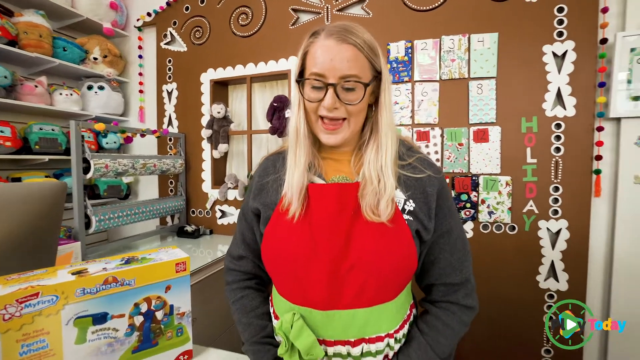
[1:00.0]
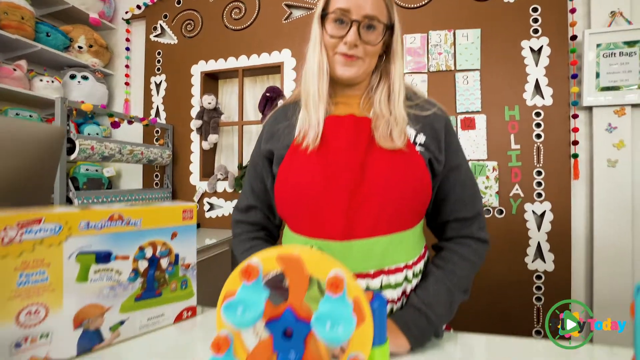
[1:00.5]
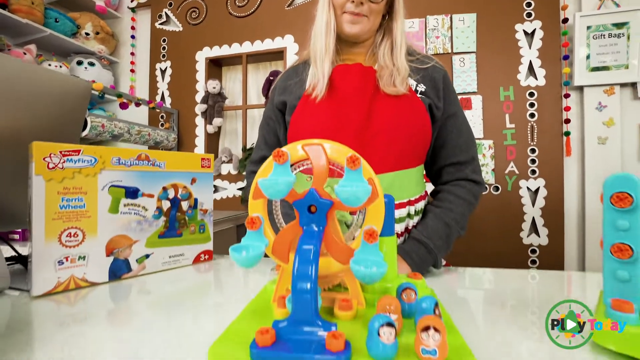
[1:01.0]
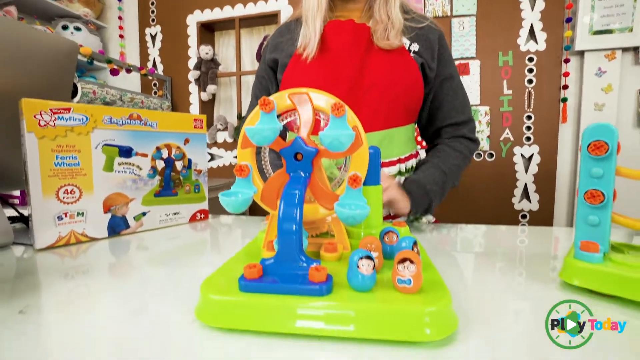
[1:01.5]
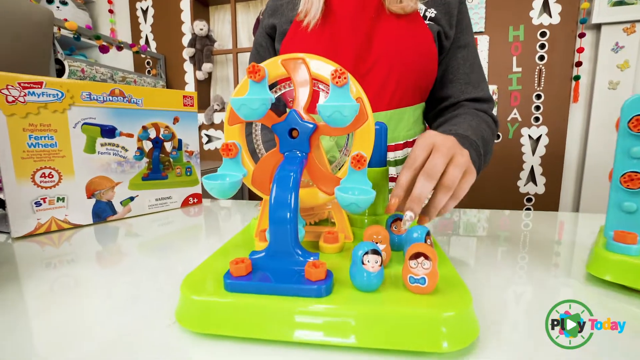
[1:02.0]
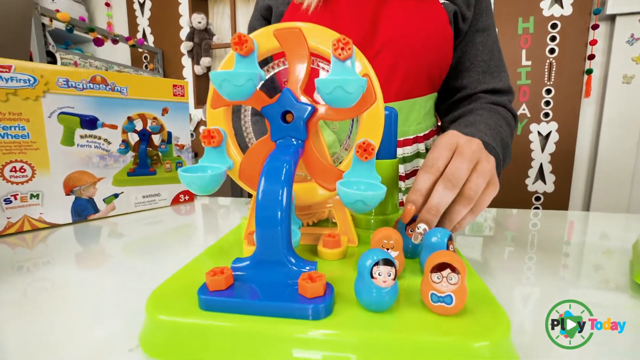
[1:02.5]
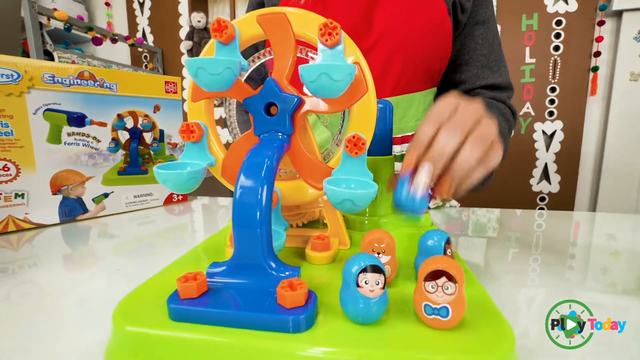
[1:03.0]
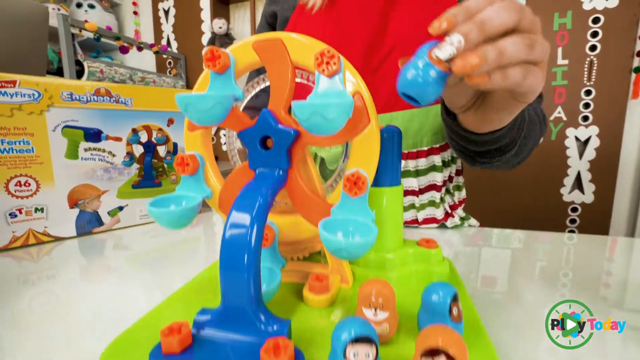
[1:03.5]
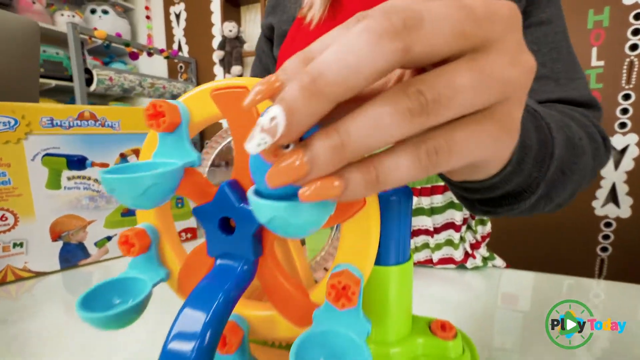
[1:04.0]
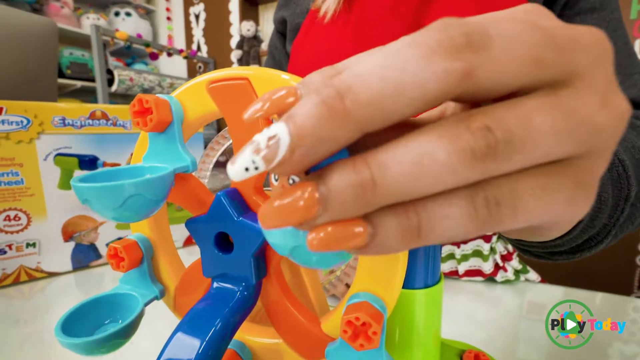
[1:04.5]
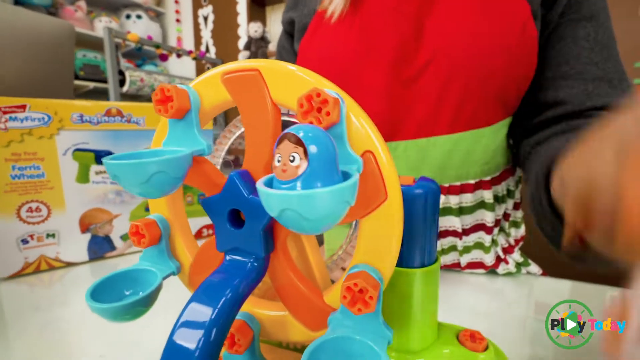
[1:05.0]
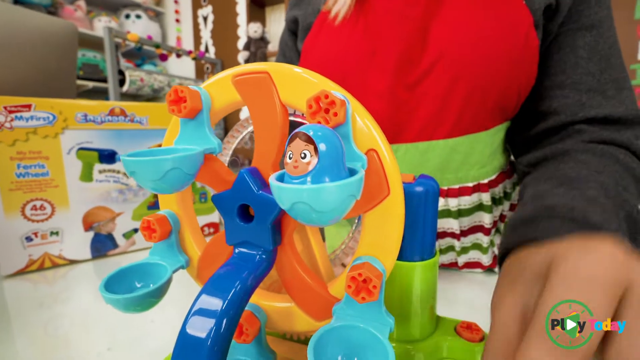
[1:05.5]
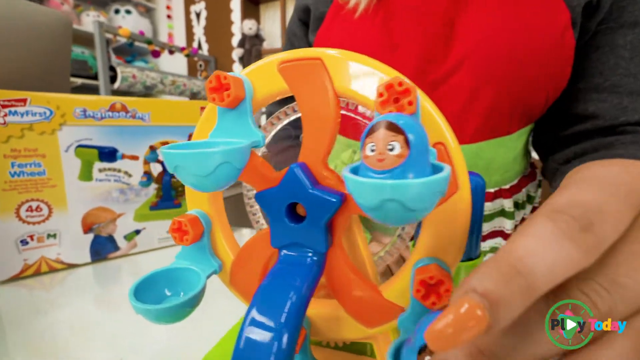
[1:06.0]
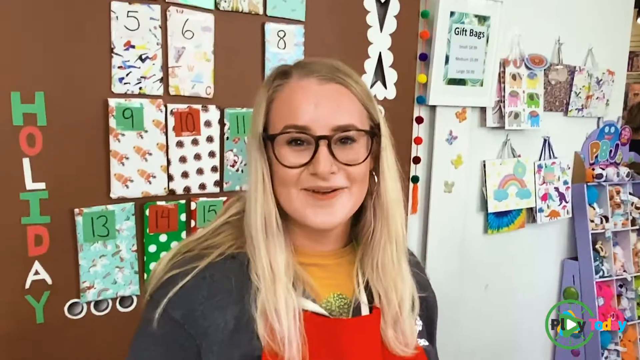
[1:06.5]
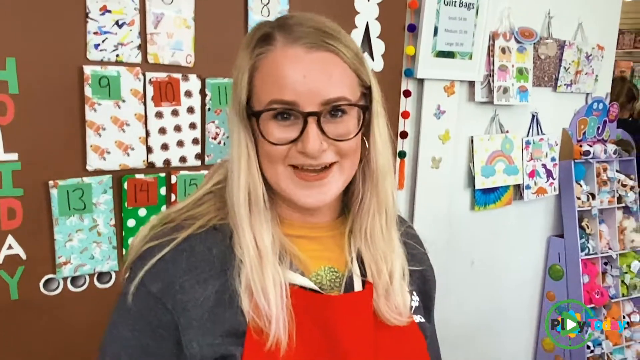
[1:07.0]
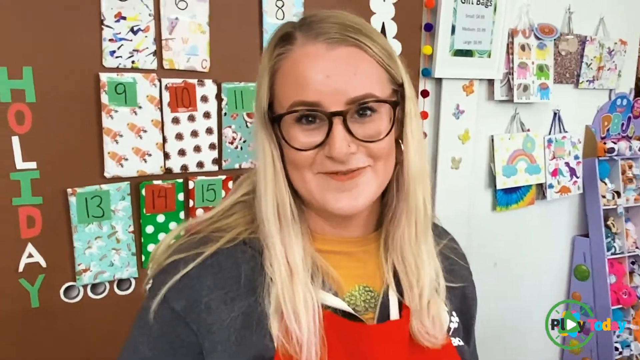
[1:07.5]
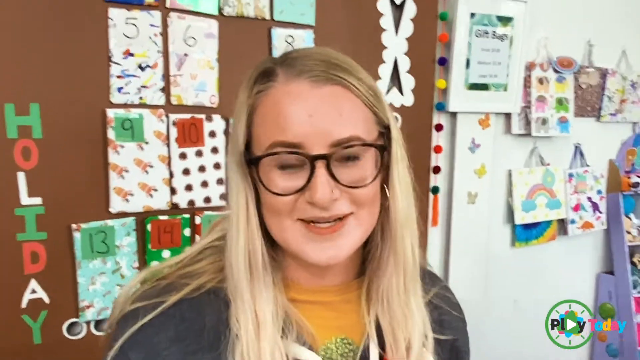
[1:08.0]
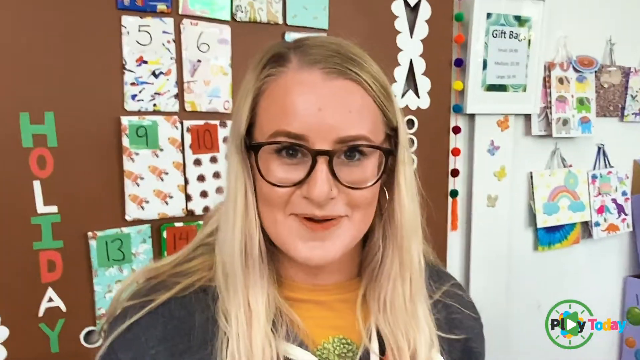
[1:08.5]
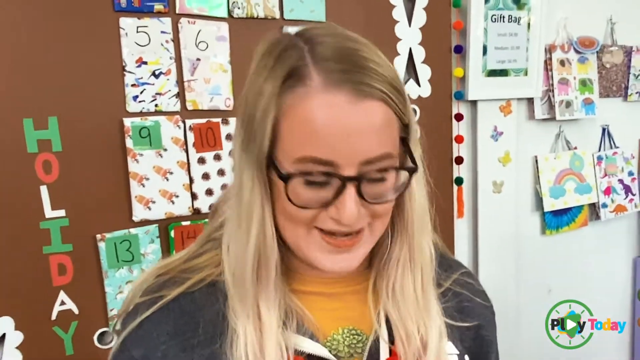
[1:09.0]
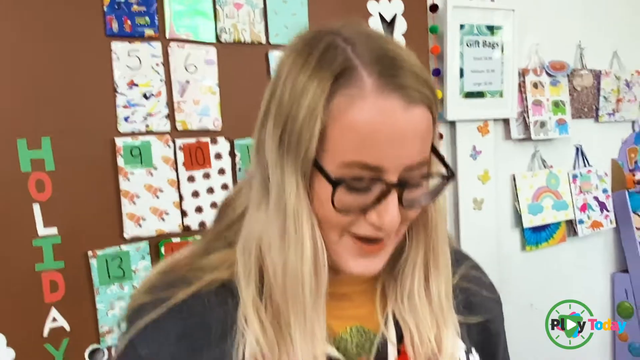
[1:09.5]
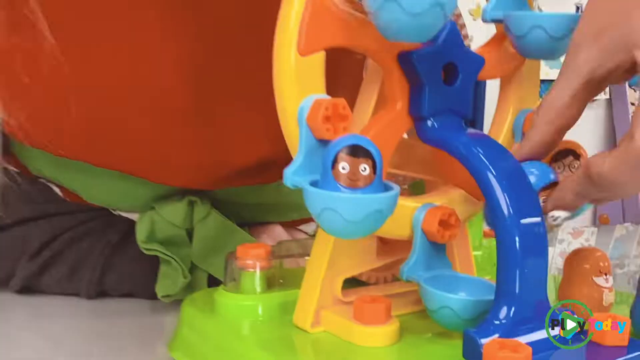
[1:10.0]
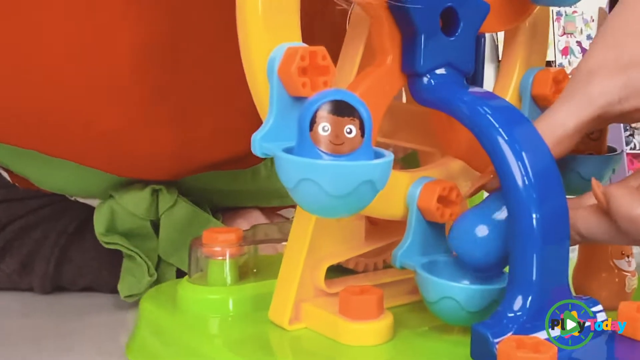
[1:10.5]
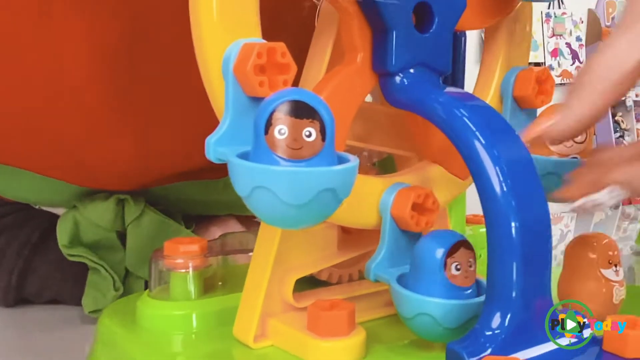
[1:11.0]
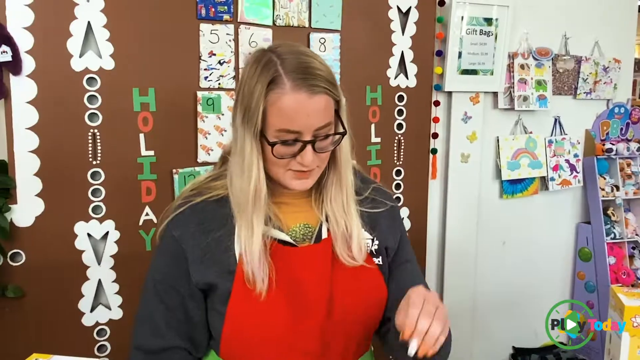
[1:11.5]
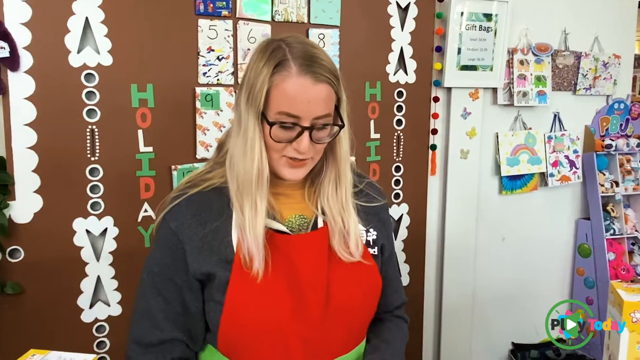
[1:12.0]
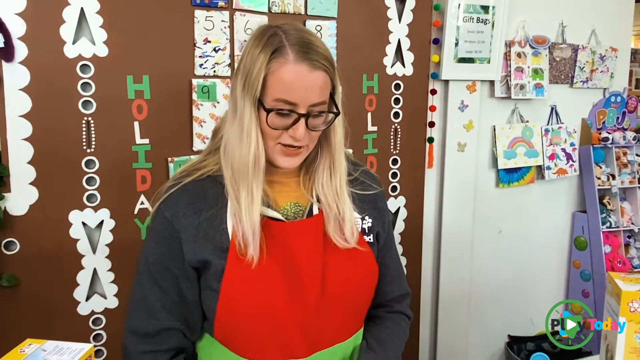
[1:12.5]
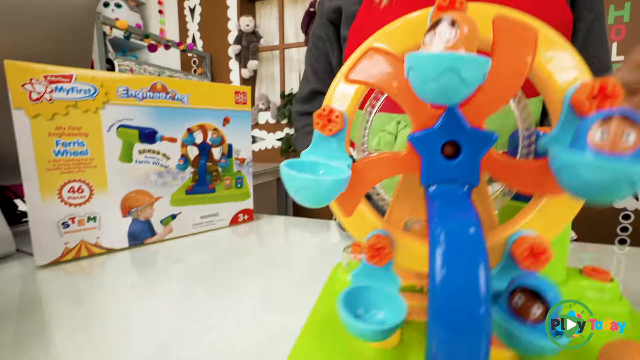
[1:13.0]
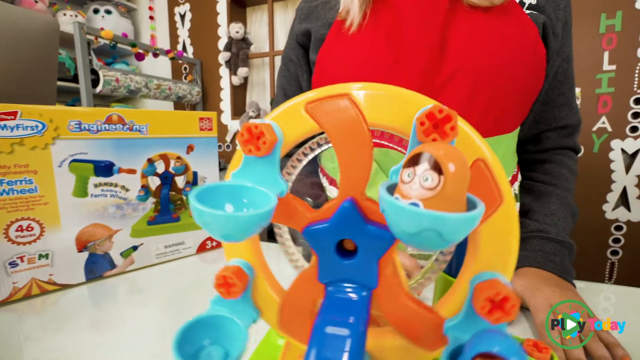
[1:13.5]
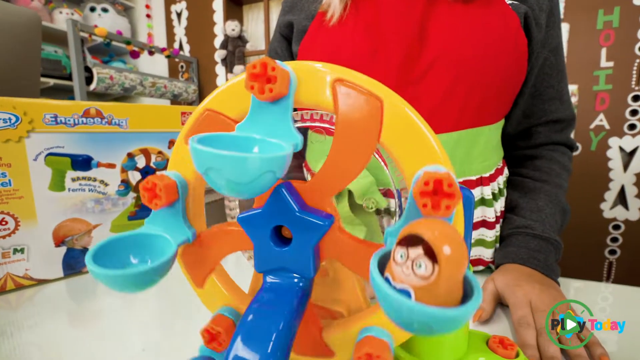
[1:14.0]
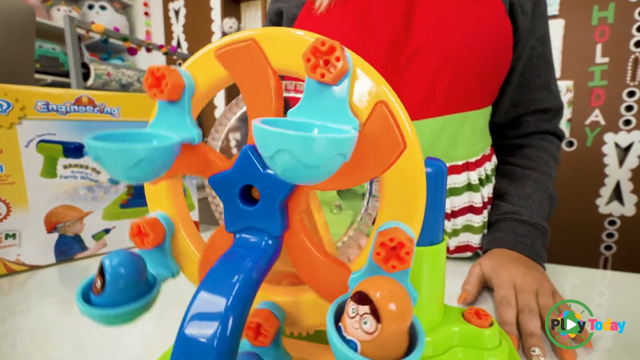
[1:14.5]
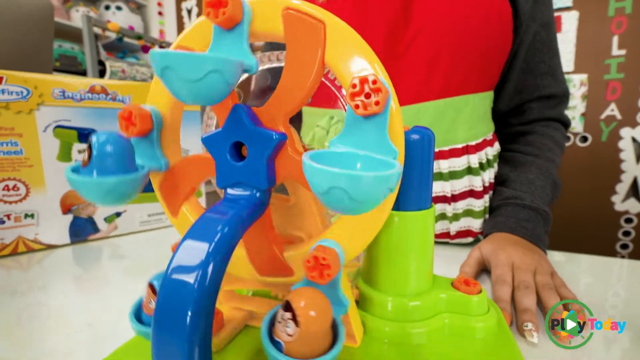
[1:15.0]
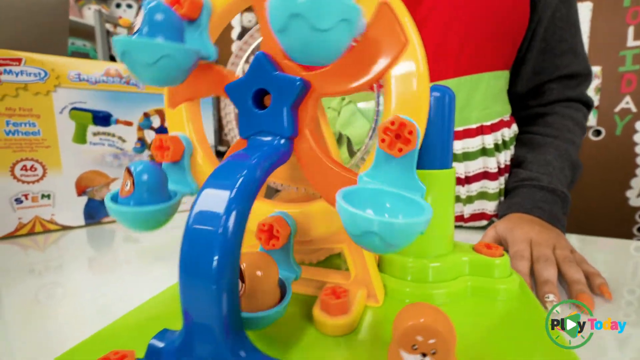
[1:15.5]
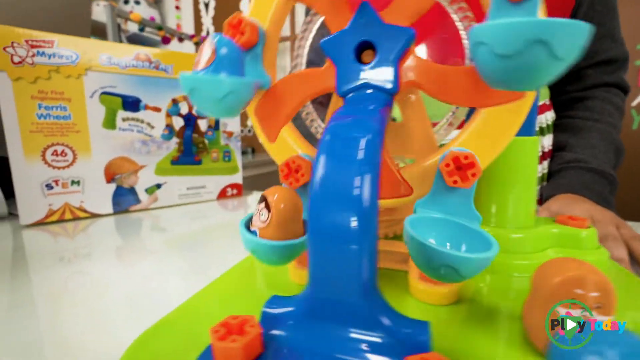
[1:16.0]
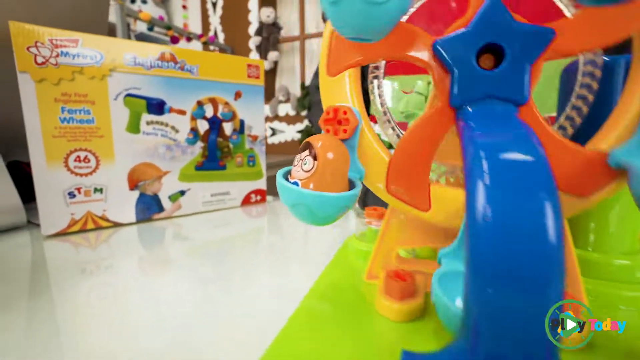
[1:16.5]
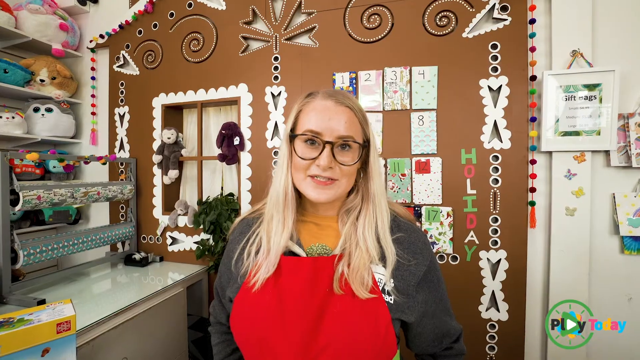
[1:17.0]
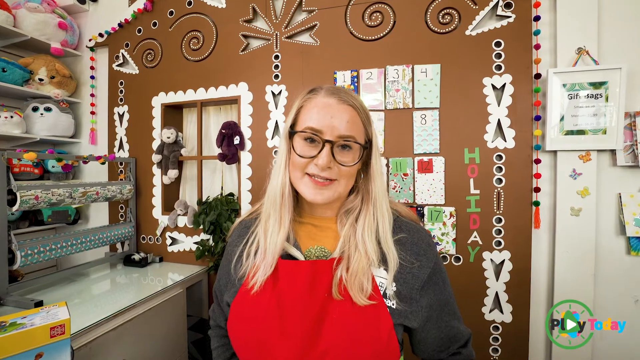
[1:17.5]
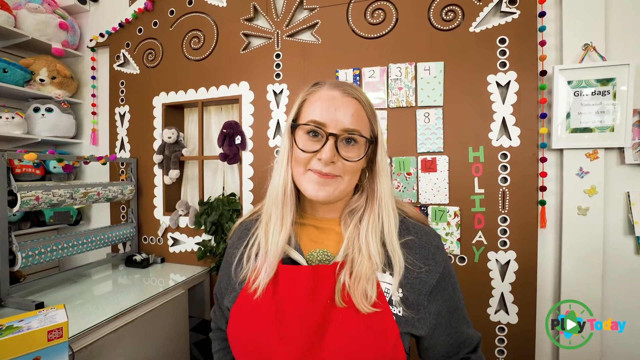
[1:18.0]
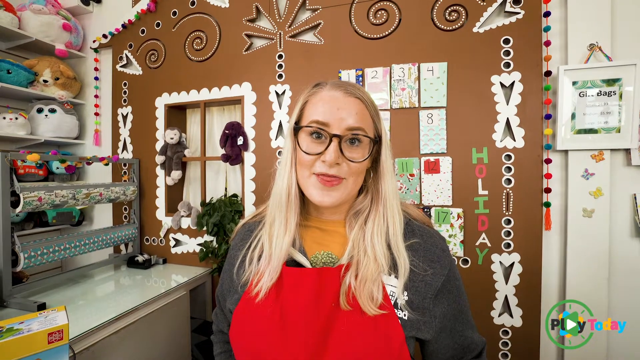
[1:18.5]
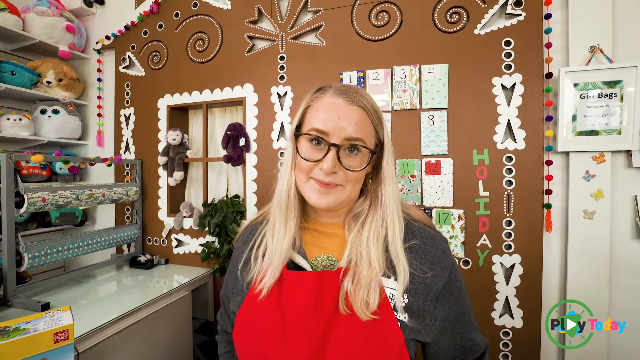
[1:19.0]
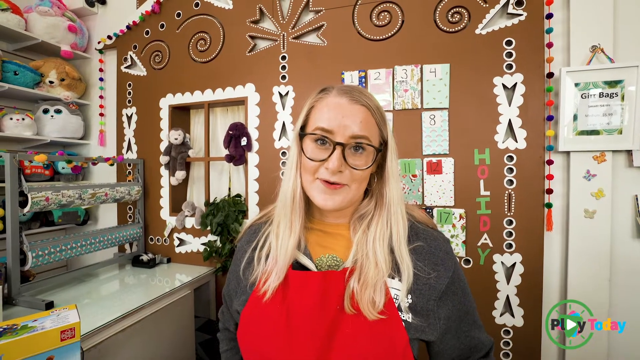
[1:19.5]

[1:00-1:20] The Caucasian woman is still alone behind the counter of the toy shop, demonstrating how to use the toys she sells. In the background the word "holiday" is written. She demonstrates one particular toy in front of her. No one else is with her.